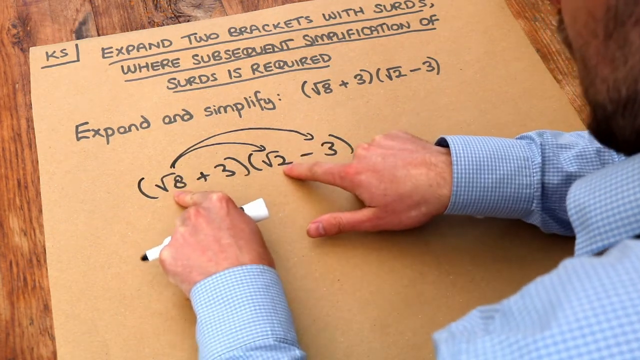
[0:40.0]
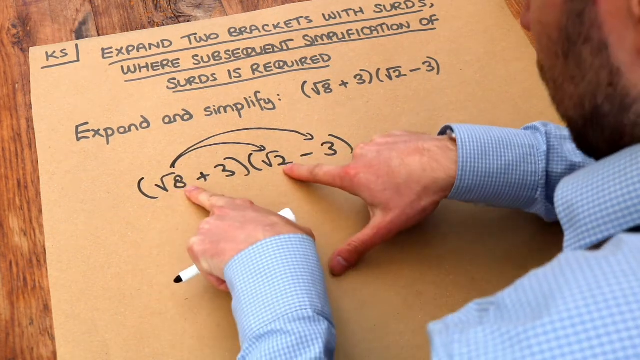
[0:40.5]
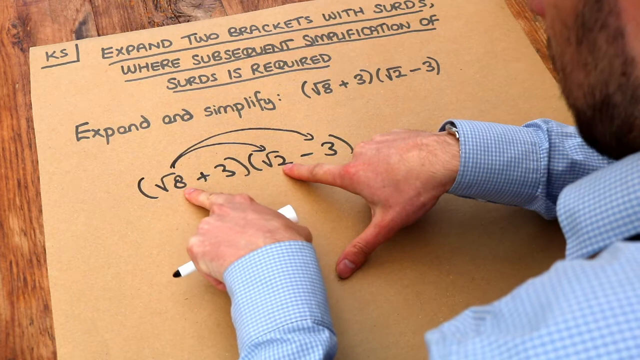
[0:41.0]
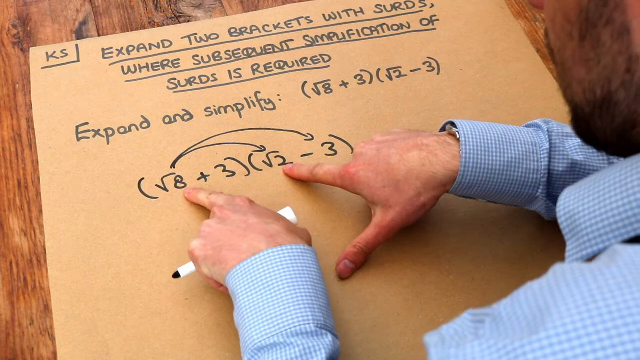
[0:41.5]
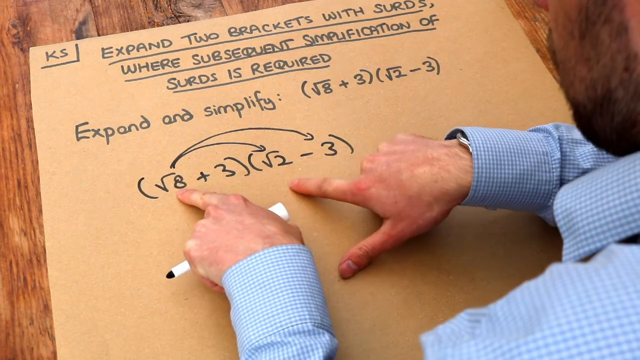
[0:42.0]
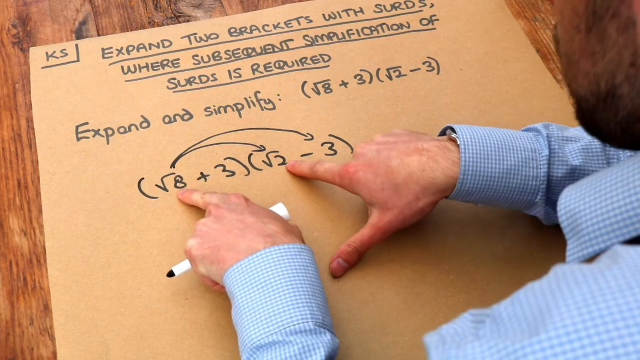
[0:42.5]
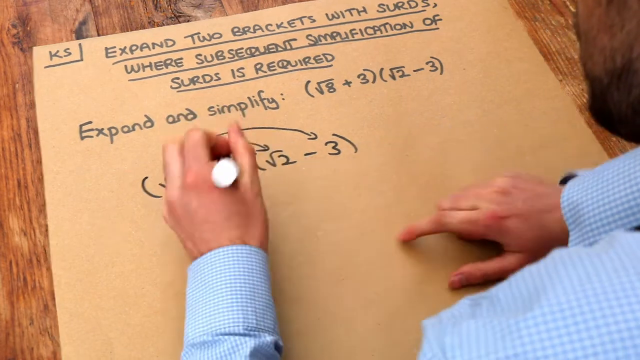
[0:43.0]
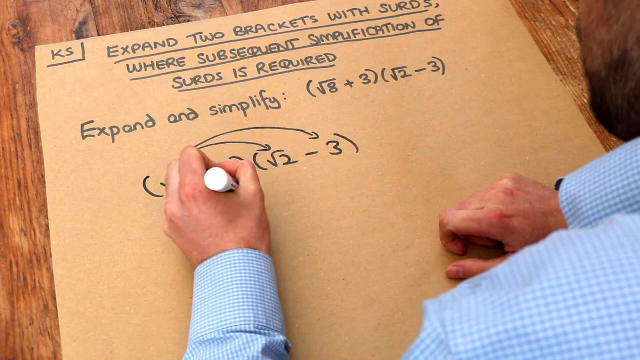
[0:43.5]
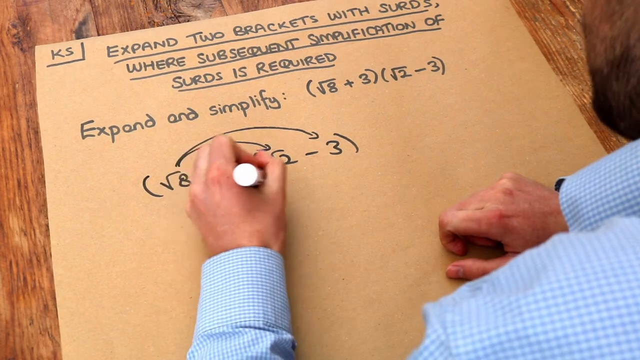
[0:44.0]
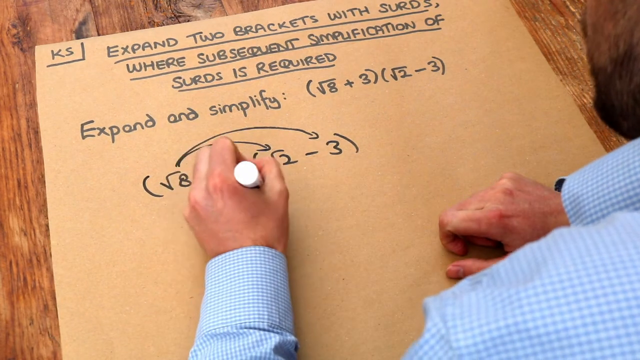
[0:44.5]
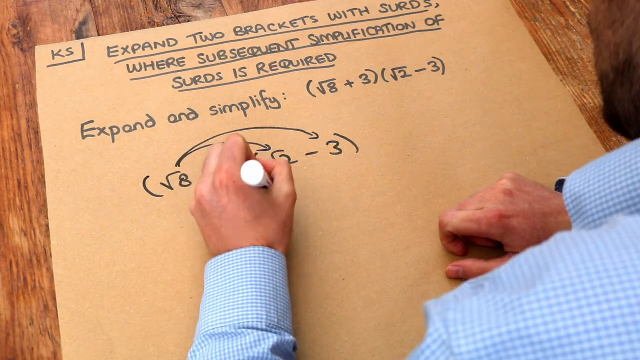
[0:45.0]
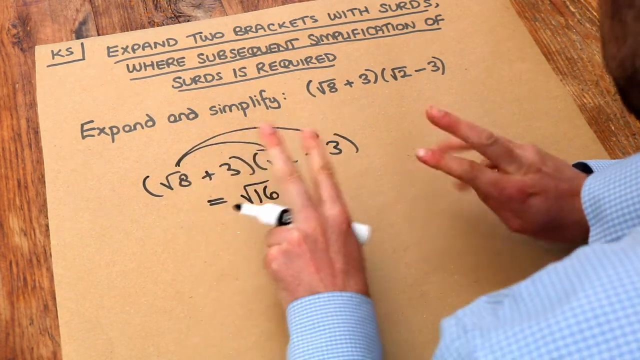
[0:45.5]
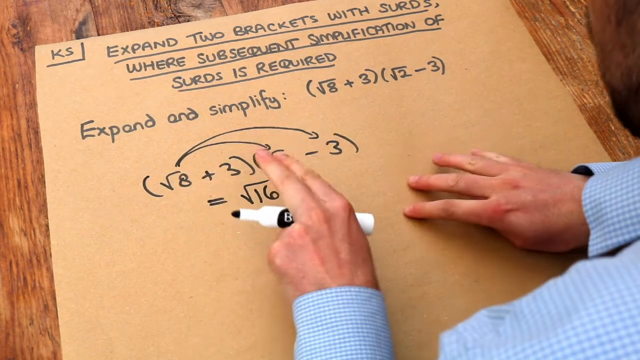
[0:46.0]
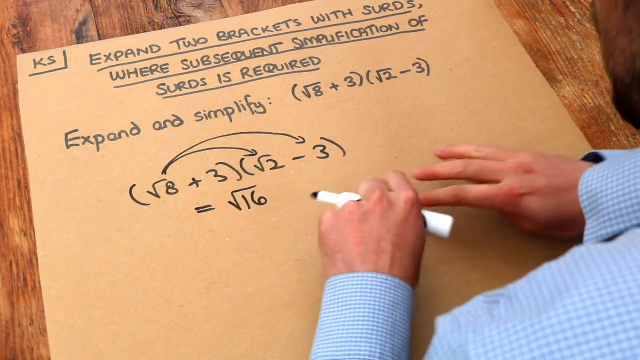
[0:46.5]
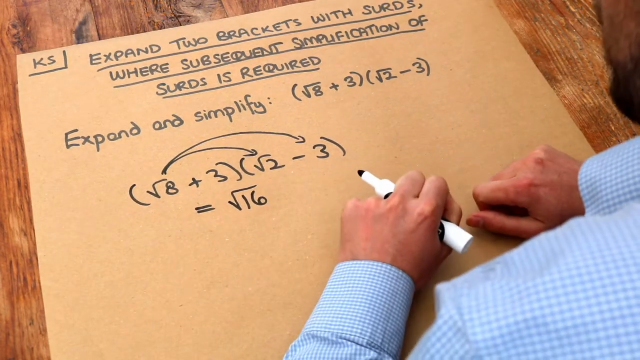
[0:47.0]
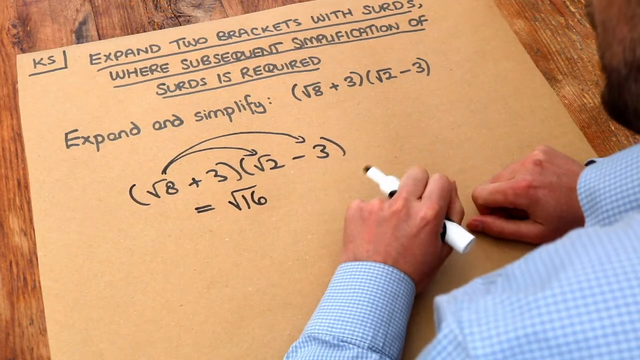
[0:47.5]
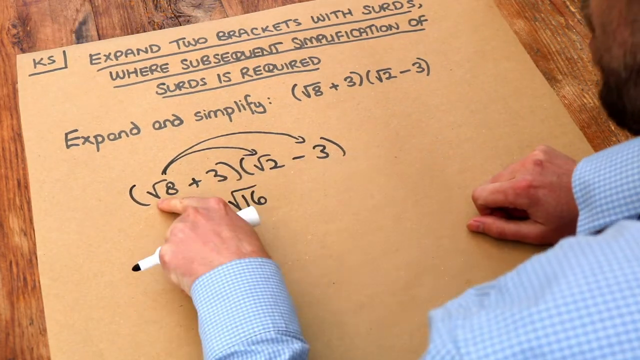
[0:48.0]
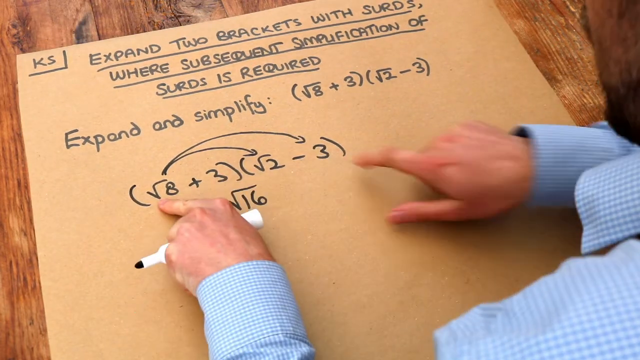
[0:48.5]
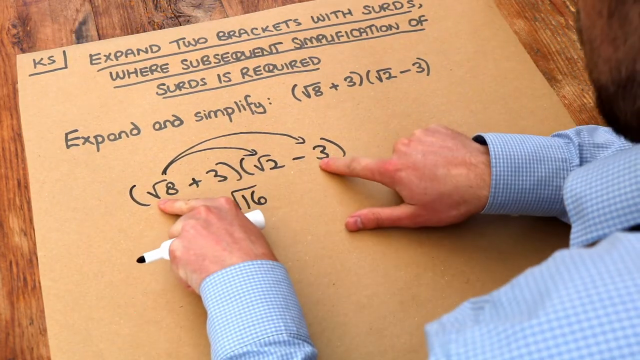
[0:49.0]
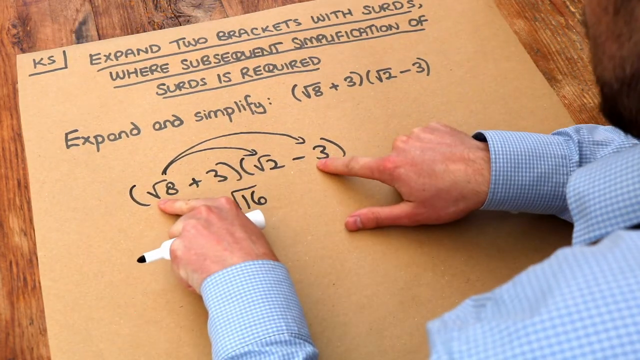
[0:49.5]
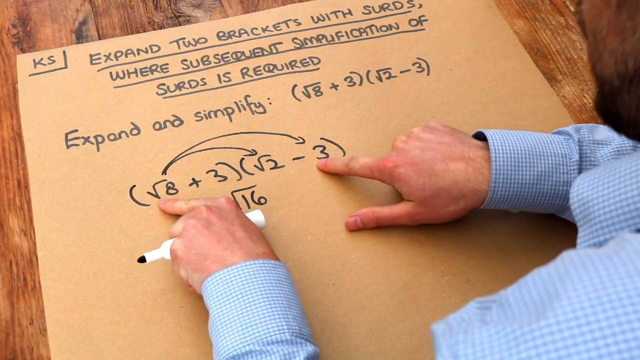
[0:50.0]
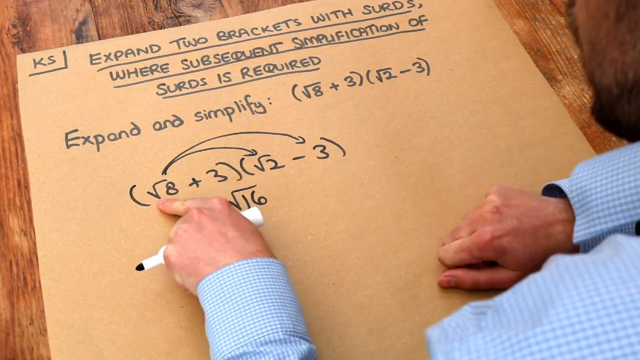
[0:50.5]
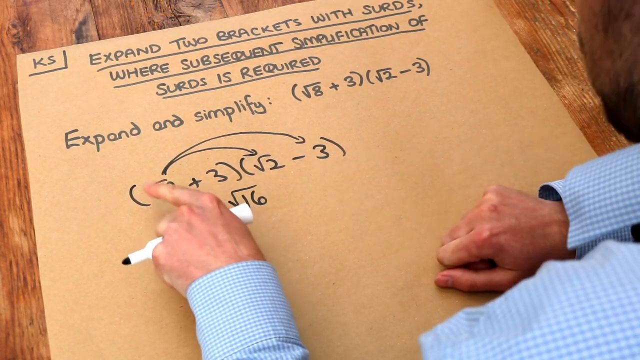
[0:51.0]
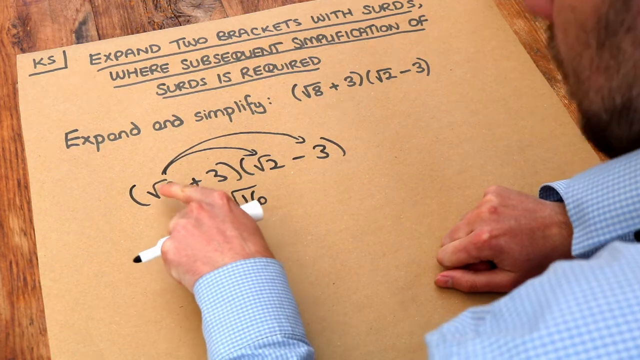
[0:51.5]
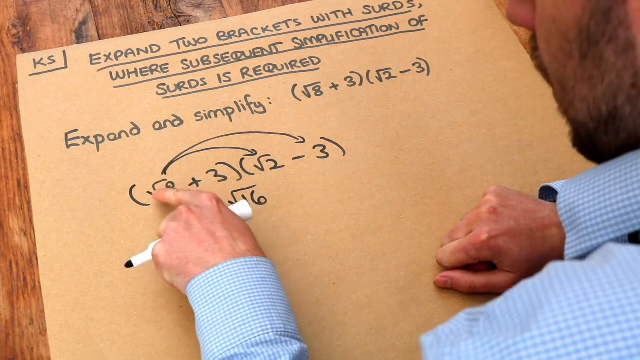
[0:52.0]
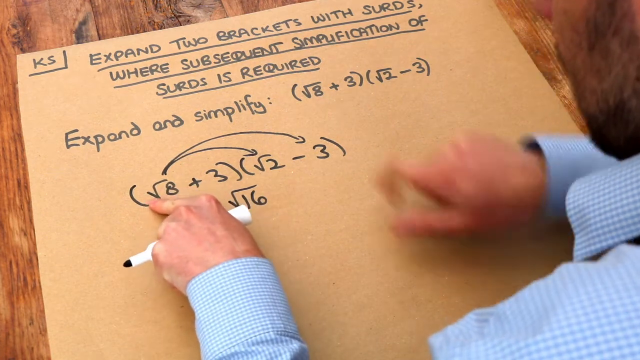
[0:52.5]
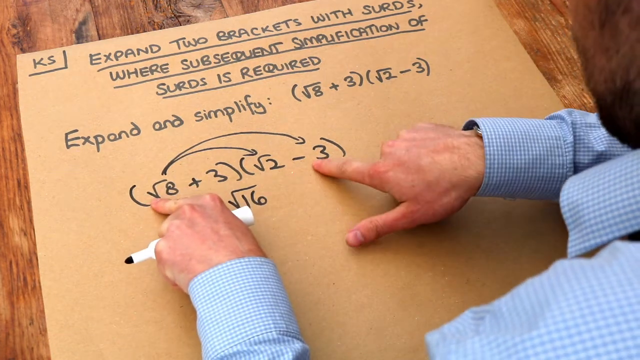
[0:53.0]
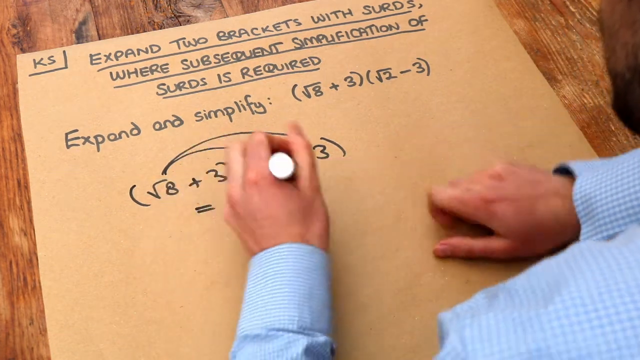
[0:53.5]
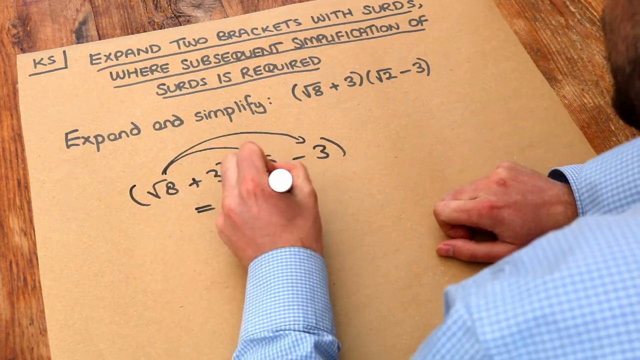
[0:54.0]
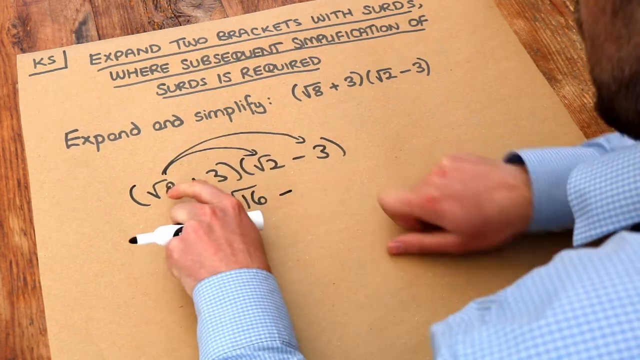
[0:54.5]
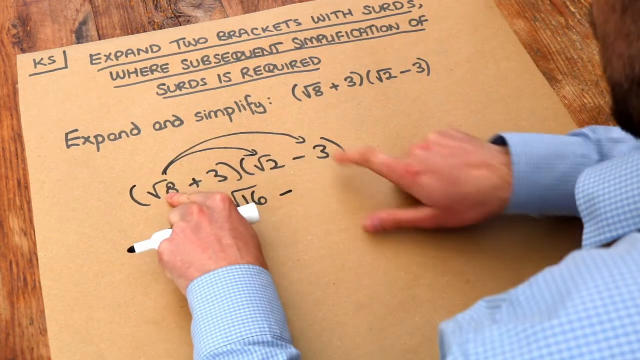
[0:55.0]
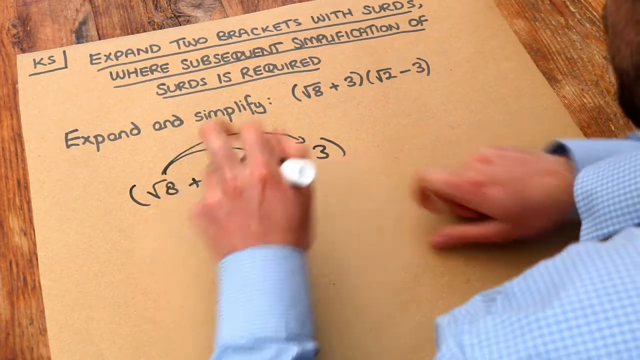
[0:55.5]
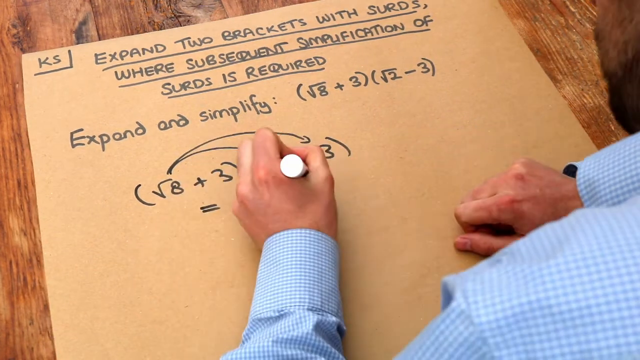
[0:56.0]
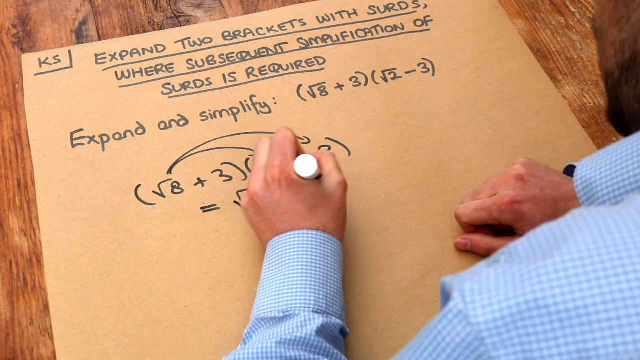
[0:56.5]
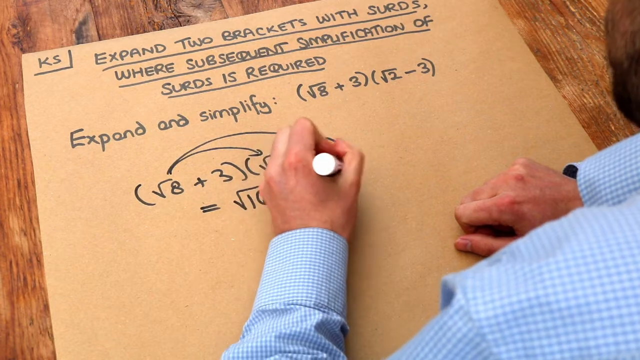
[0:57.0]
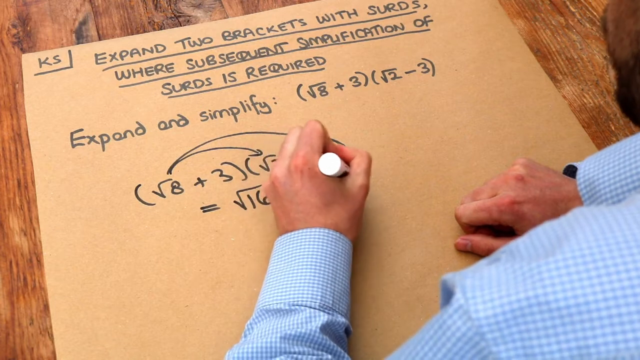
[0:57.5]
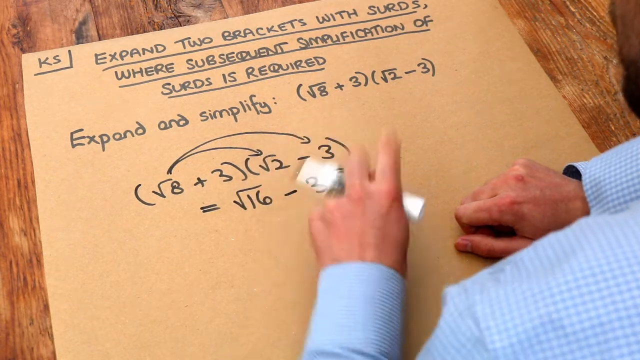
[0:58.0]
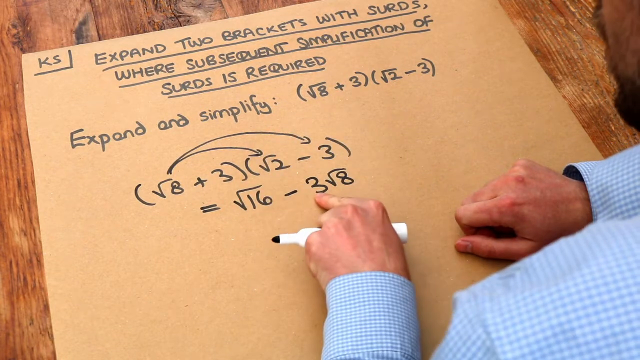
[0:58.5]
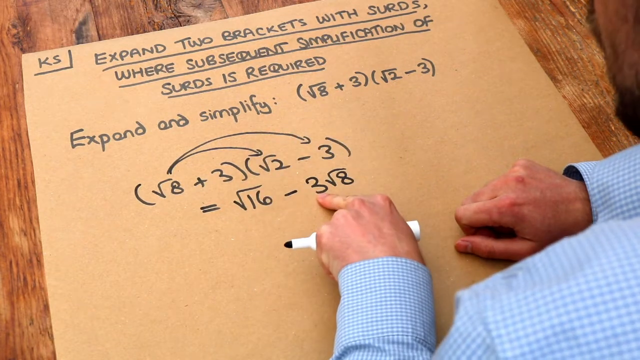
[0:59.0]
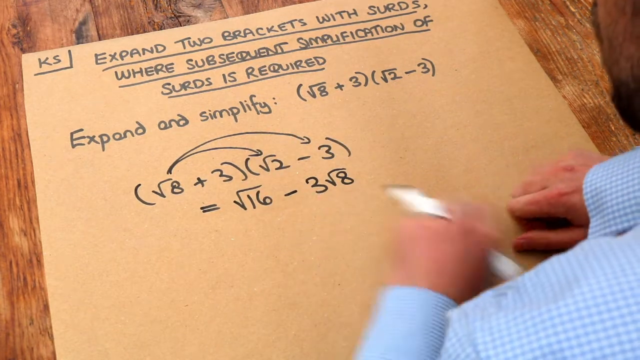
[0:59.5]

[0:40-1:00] He keeps pointing at the square root of eight with his left finger and the square root of two with his right finger, tapping them while his jaw moves. The rest of the fingers of his left hand are folded under, holding the marker; on the other hand the back of the hand shows, with the thumb stretched out down to the left toward the left wrist. He writes with the marker in his left hand while the right hand comes back down to rest, showing its knuckles, back, a little of the fingers and the thumb. He writes "equals square root of 16", sticks out two fingers on his left hand and four on his right, puts his hands back in front of him, and points at the square root of eight with his left hand and the three with his right. His jaw is still barely moving. His right hand moves down to tap the square root of eight, then back up to point at the three. He writes a minus sign next to the square root of 16, rests his right hand, points at the square root of eight and the three again, then writes three square root of eight. He writes in black ink, not directly under the lines above but angled slightly to the right.